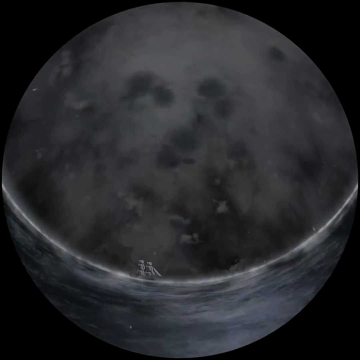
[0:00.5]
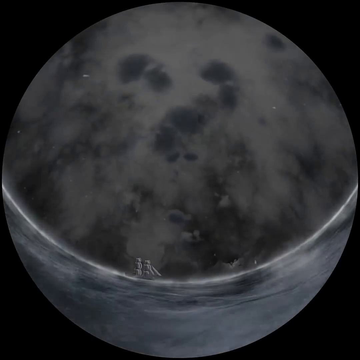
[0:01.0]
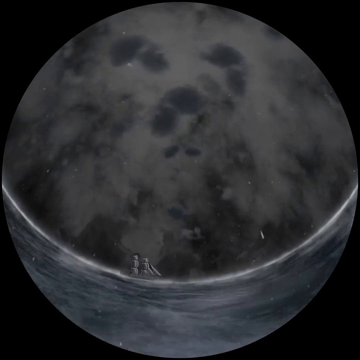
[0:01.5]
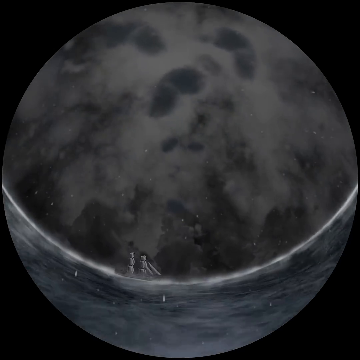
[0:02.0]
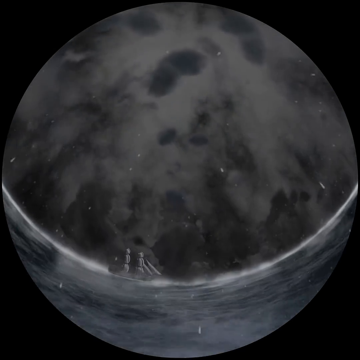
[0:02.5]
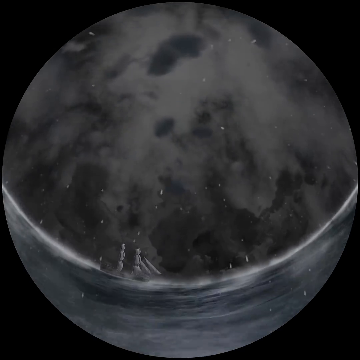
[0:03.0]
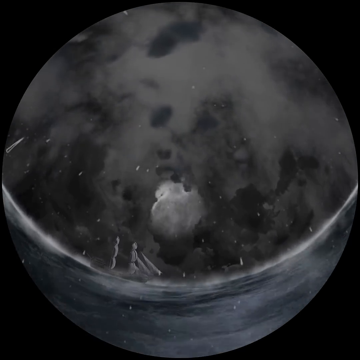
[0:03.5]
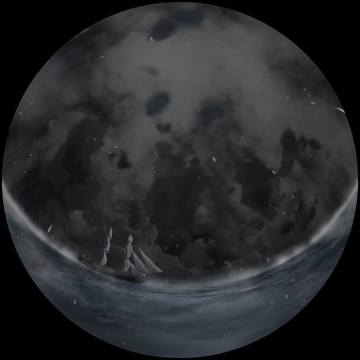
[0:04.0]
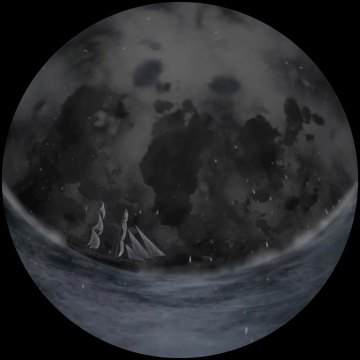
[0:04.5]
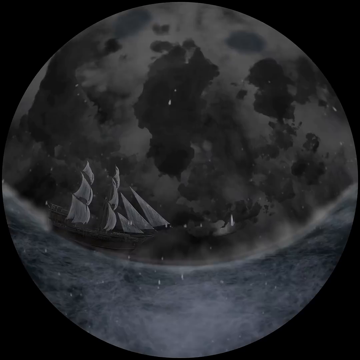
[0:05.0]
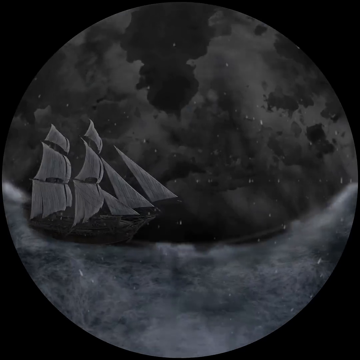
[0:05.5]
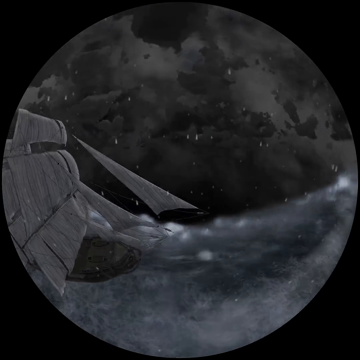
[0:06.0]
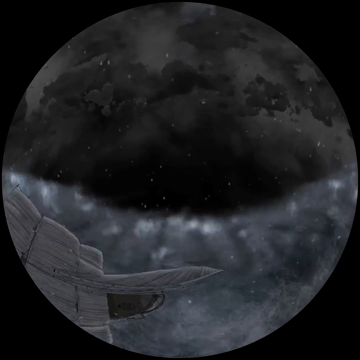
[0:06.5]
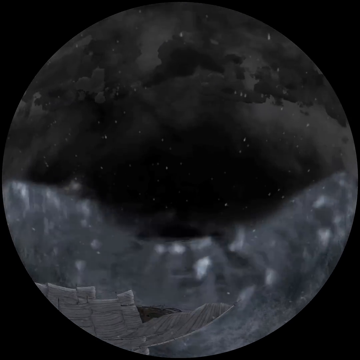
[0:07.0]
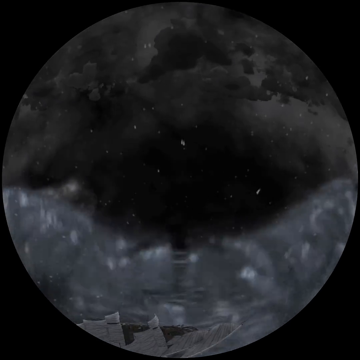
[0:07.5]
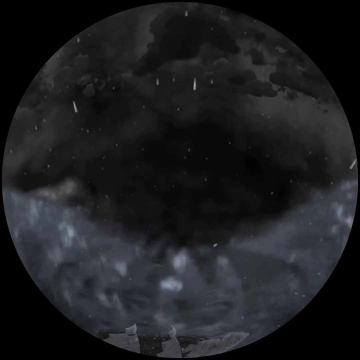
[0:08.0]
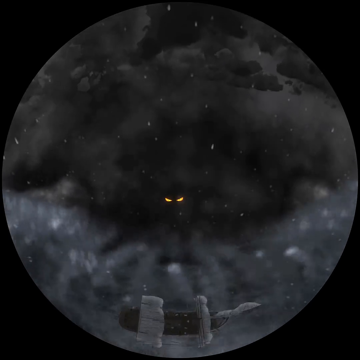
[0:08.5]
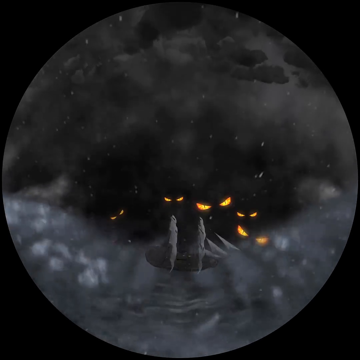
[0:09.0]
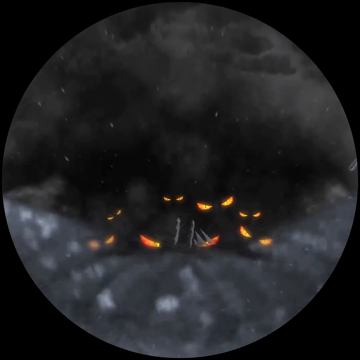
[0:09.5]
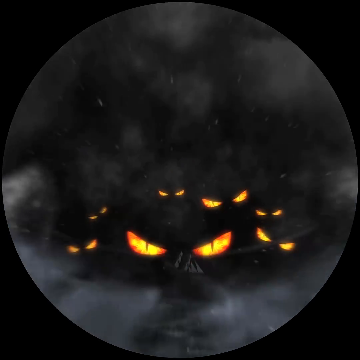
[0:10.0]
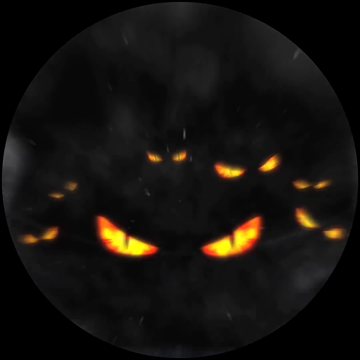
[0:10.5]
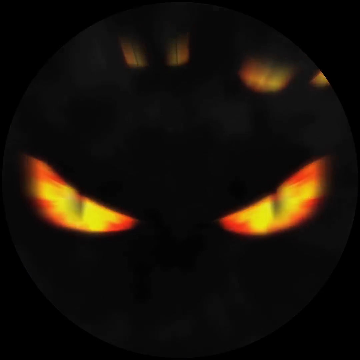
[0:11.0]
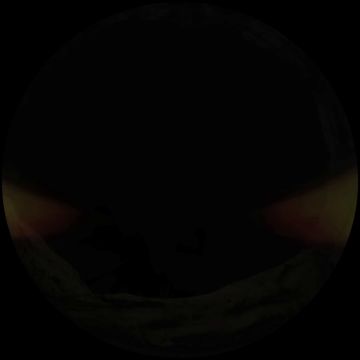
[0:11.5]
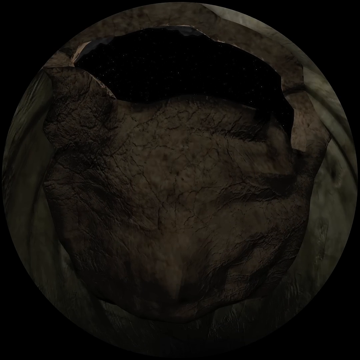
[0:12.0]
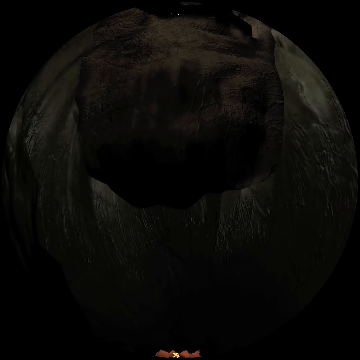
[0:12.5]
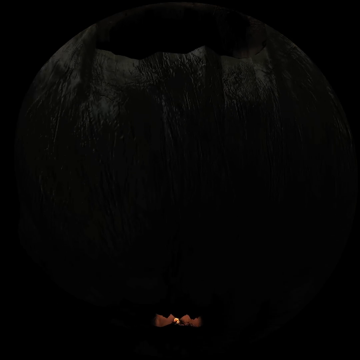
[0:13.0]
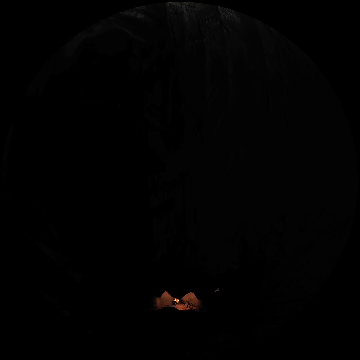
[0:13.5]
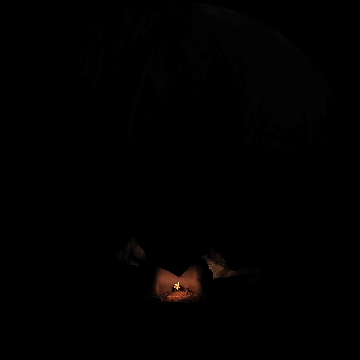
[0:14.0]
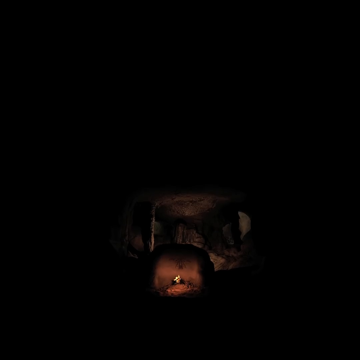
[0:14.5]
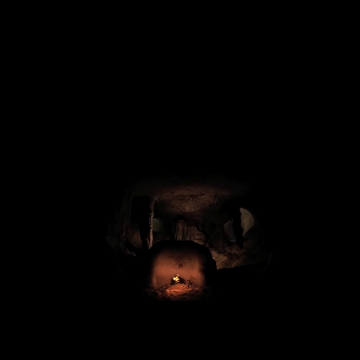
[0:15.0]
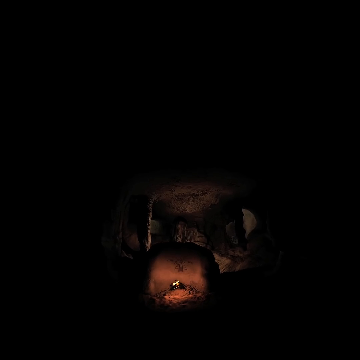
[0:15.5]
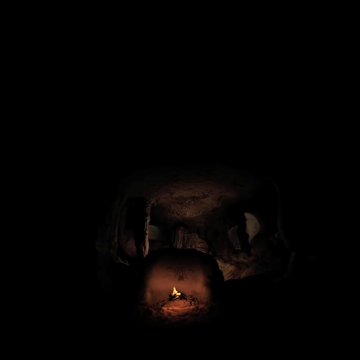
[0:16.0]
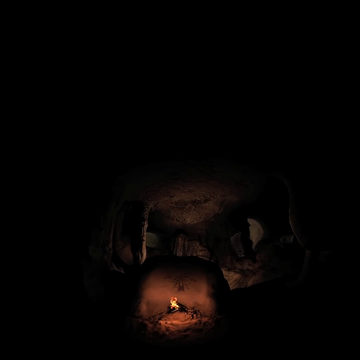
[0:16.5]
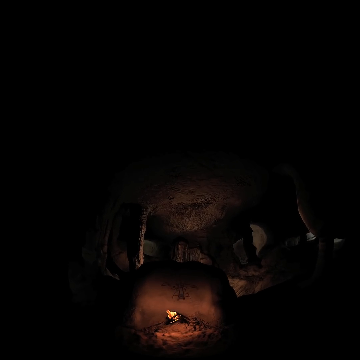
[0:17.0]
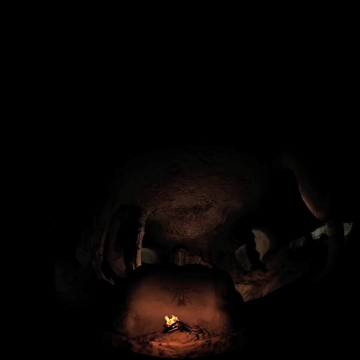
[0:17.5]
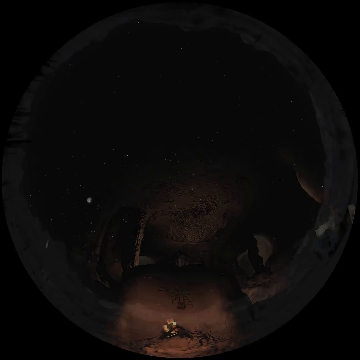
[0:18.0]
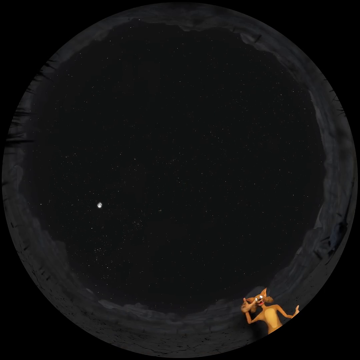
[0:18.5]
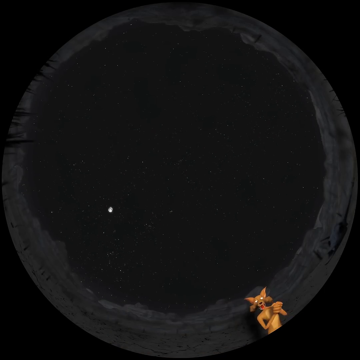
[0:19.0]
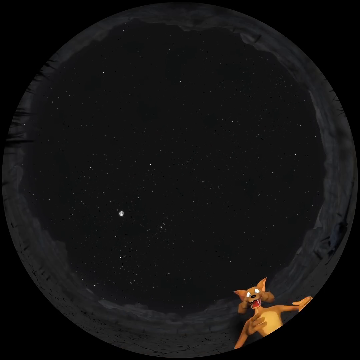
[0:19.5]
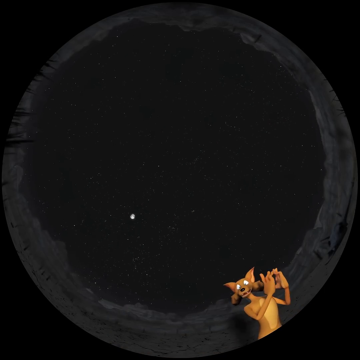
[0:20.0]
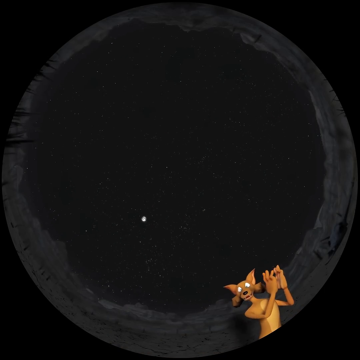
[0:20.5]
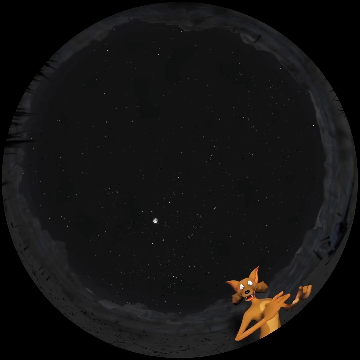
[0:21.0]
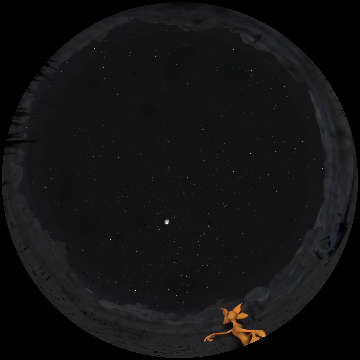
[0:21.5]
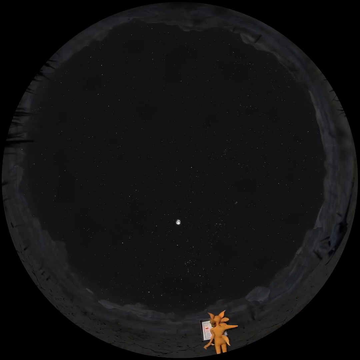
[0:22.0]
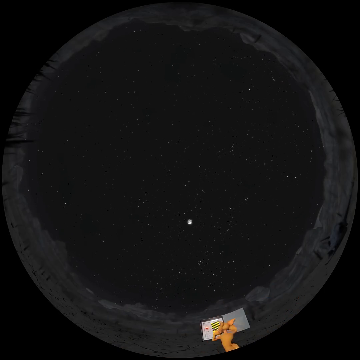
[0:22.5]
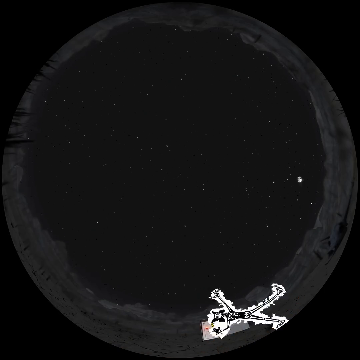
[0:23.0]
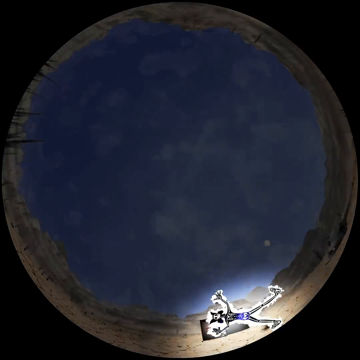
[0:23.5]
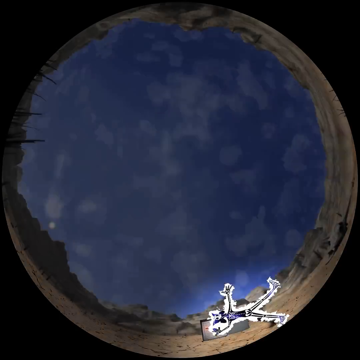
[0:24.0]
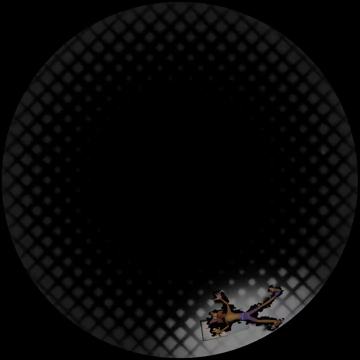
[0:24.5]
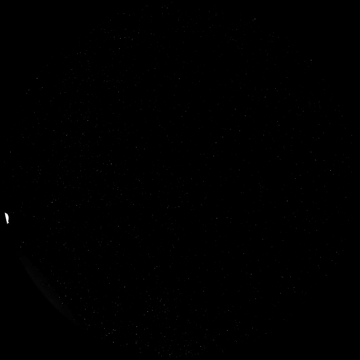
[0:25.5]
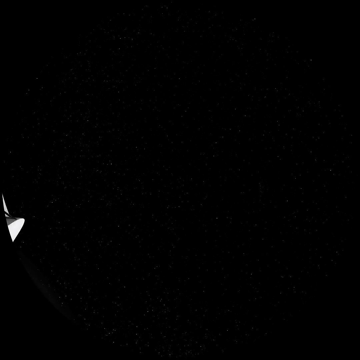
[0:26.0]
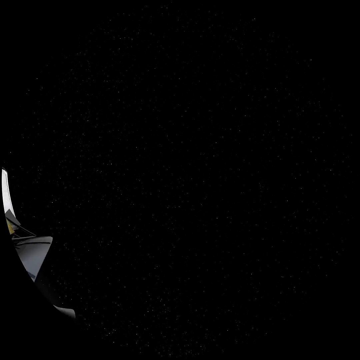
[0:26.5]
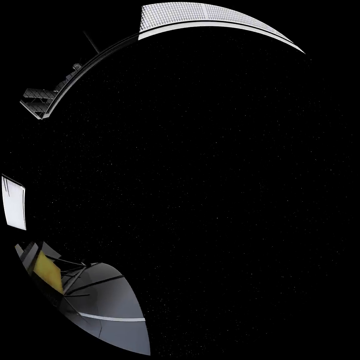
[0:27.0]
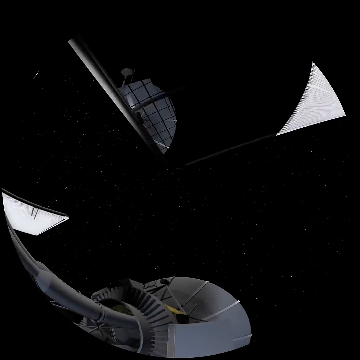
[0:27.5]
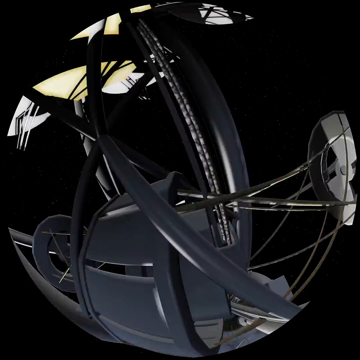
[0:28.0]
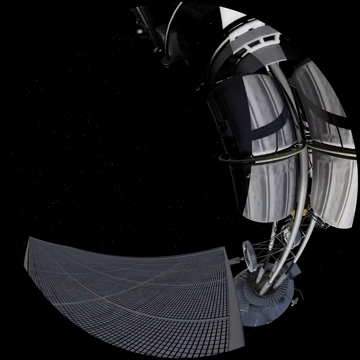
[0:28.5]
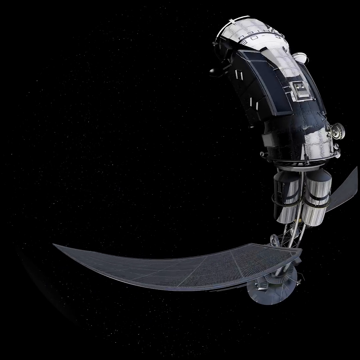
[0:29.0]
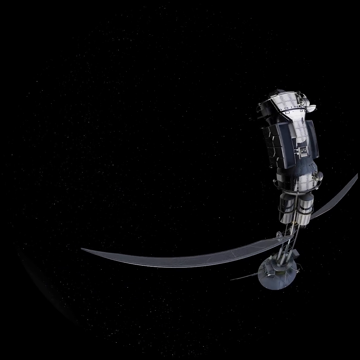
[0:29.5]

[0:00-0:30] A circular shot seems to move along water. A ship is in the distance, and there appears to be mist or clouds on the water. The sky takes up a large portion of the circle, with lightning and clouds in the background. The image is dark and gloomy, as if at night or during a storm, and small specks of rain are visible as the camera moves along the water. The camera eventually reaches a sailing ship with two large masts, each with three sails, and a smaller mast at the front with three triangular sails. The camera moves up to look down at the ship, revealing that it is on the edge of a large waterfall. The ship falls down the waterfall into a black pit where a number of yellow eyes look up at it. The ship disappears off screen, leaving only the yellow eyes emerging from the blackness. The view zooms in on the eyes, then transitions to a small fire lighting up a cave of some sort or something similar. An animated dog or coyote appears from the right corner, tapping its fingers together as if it sees something it likes while looking down at the pinwheel camera. The animal puts up a poster on the wall and then gets electrocuted in a comical way, so that all of its bones can be seen. The image then changes to a model of a space station.